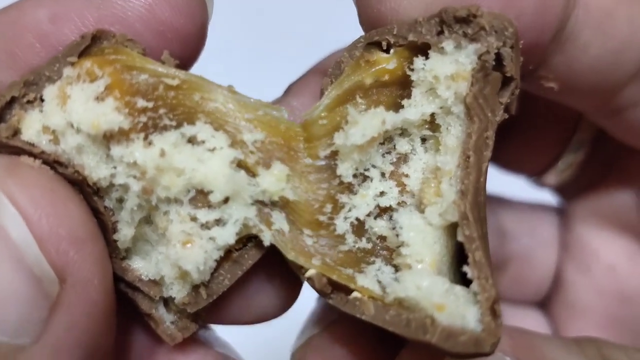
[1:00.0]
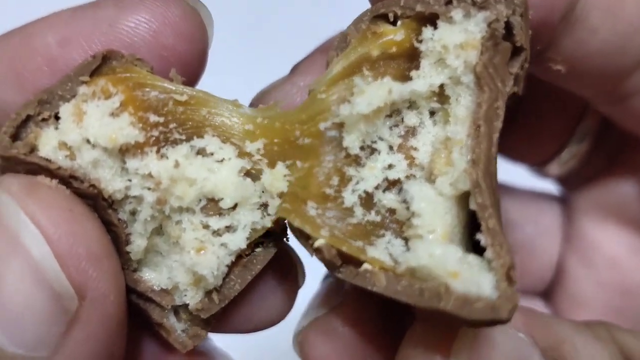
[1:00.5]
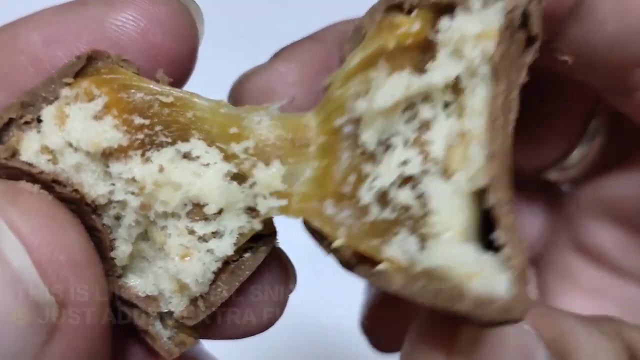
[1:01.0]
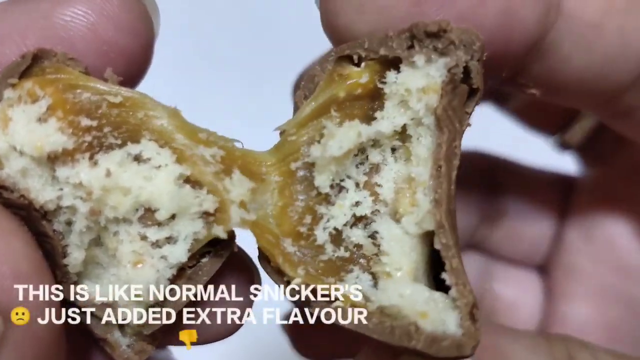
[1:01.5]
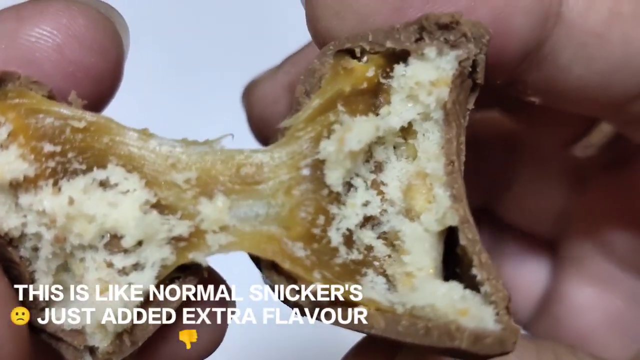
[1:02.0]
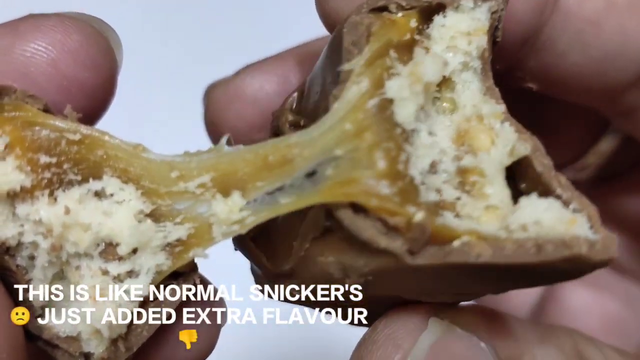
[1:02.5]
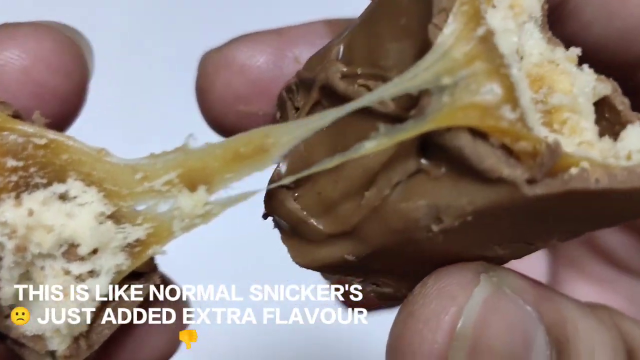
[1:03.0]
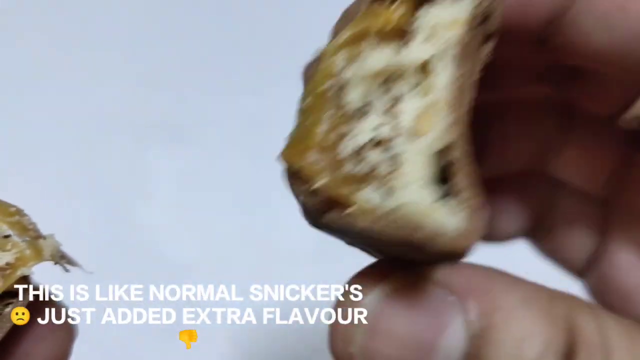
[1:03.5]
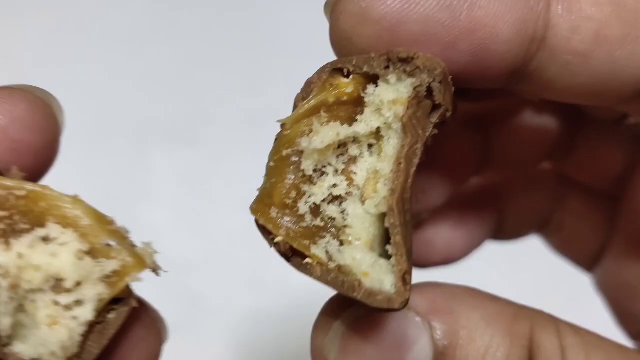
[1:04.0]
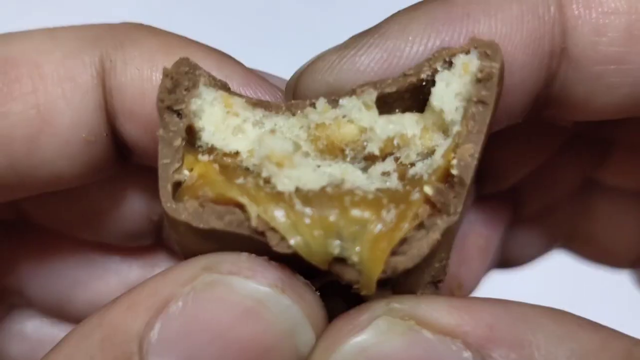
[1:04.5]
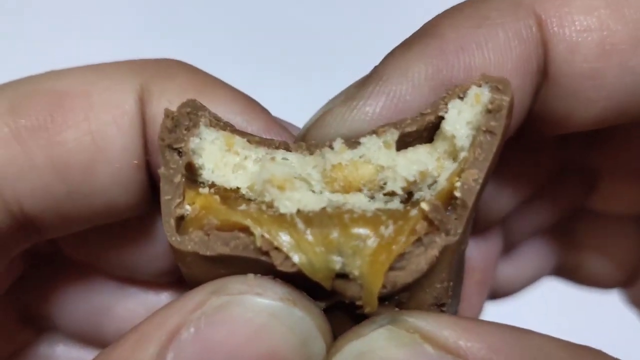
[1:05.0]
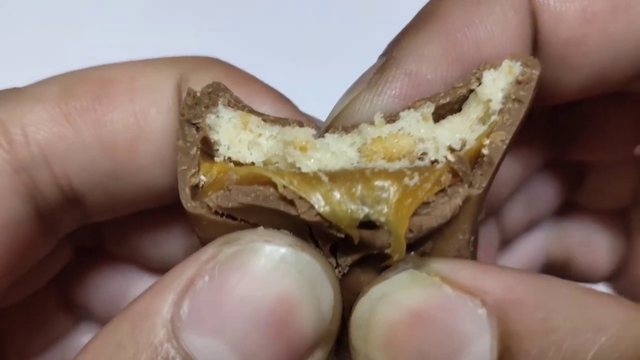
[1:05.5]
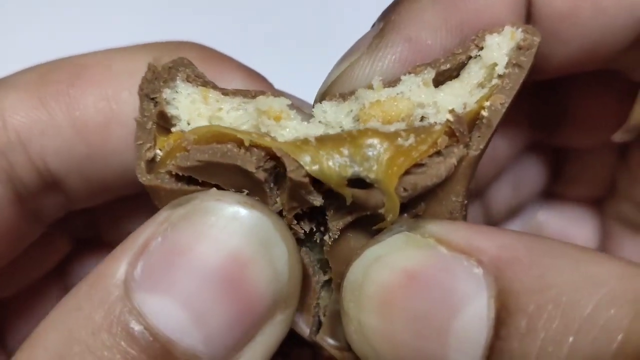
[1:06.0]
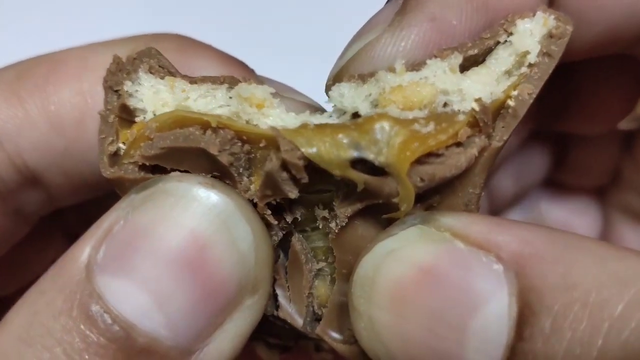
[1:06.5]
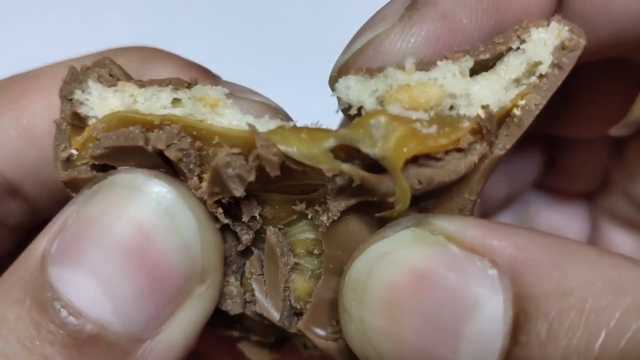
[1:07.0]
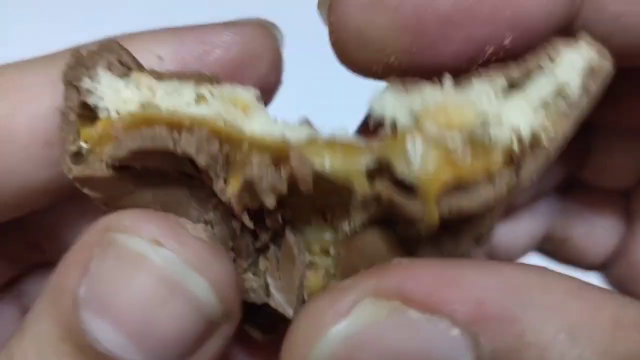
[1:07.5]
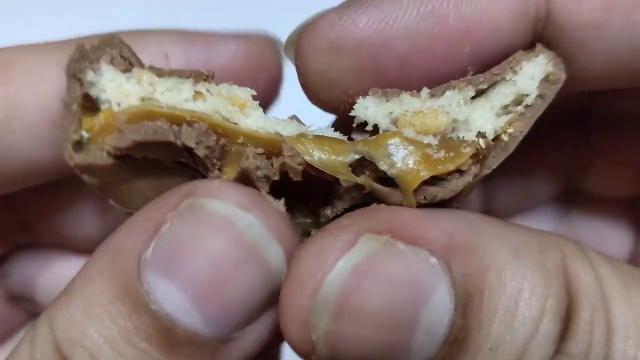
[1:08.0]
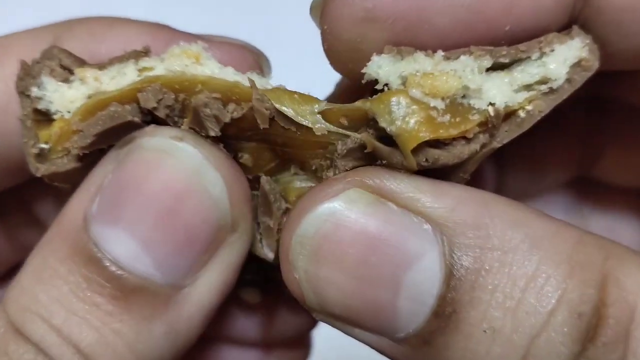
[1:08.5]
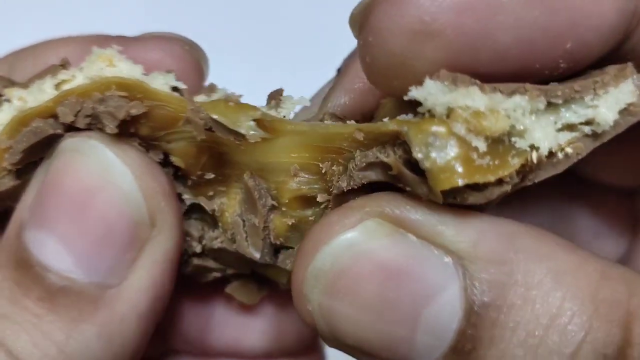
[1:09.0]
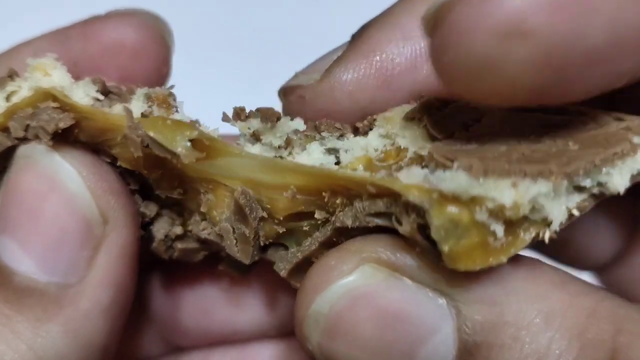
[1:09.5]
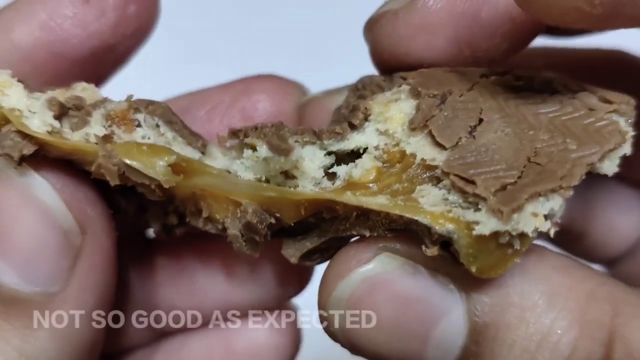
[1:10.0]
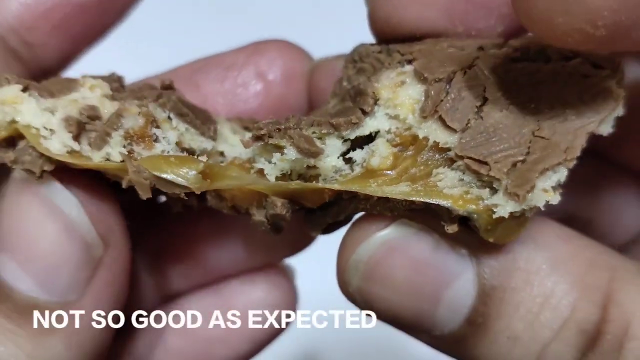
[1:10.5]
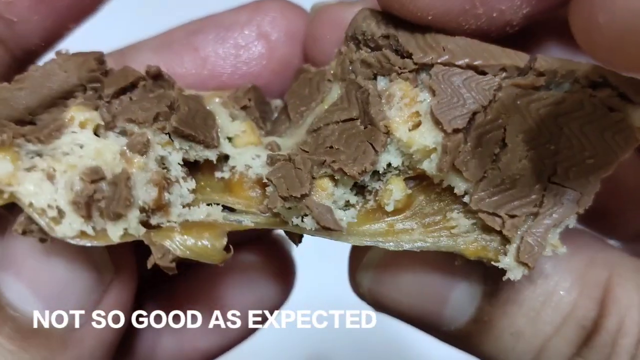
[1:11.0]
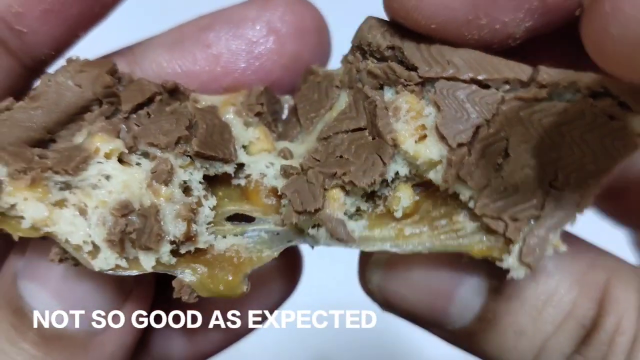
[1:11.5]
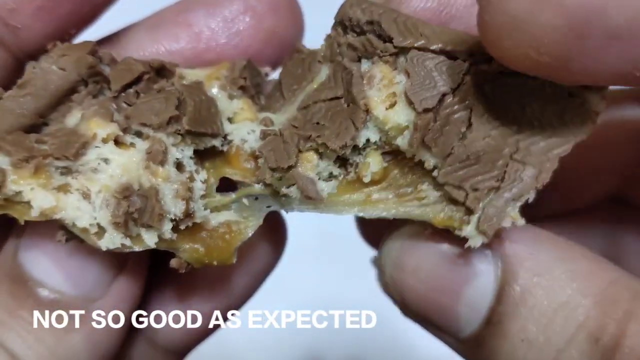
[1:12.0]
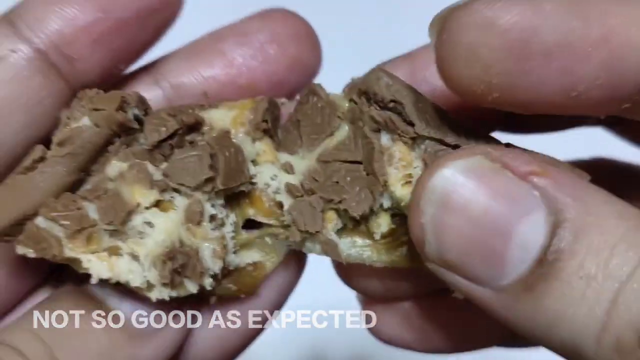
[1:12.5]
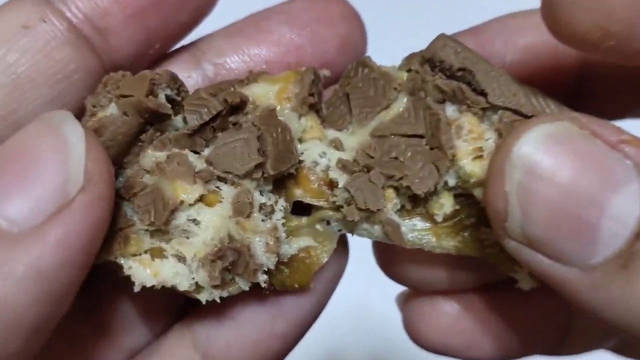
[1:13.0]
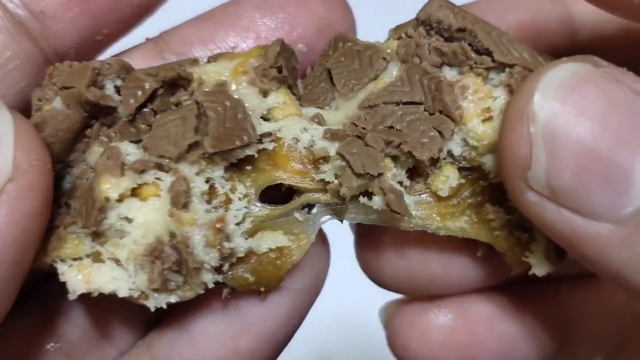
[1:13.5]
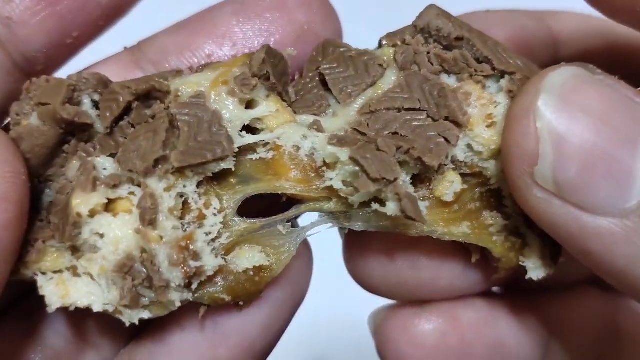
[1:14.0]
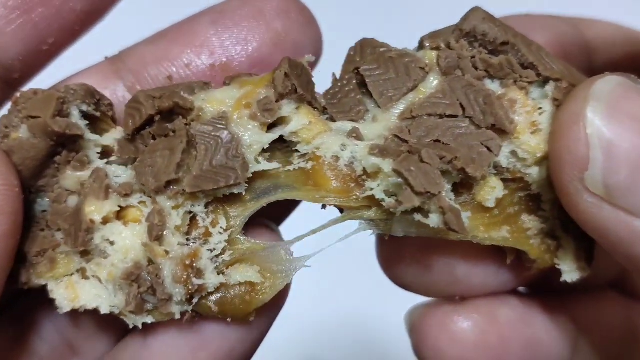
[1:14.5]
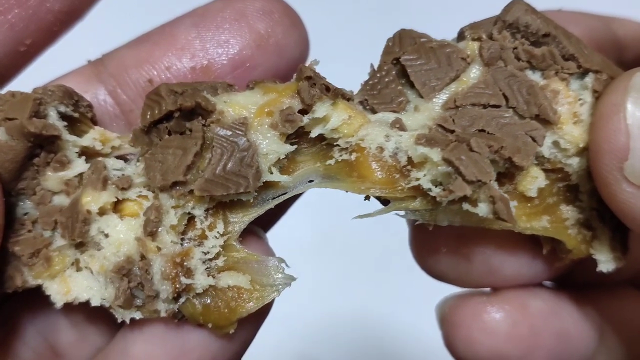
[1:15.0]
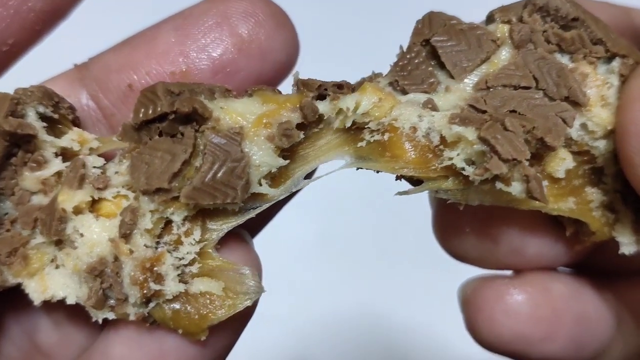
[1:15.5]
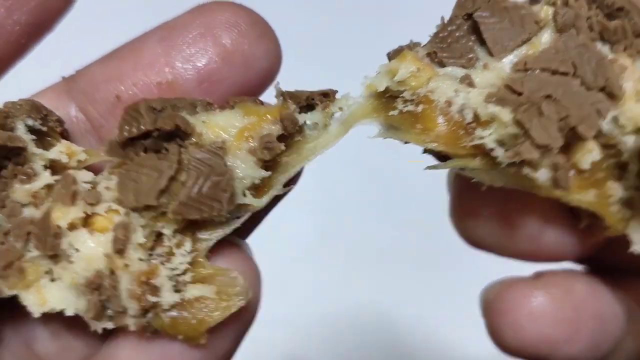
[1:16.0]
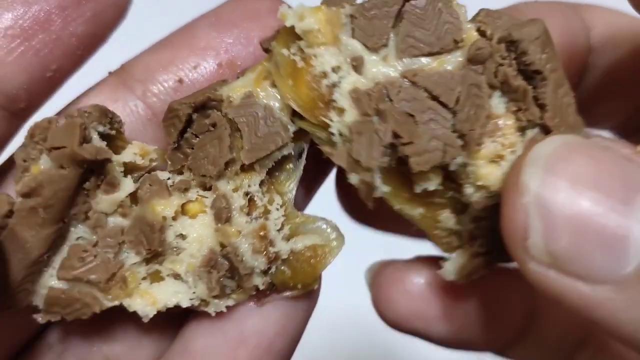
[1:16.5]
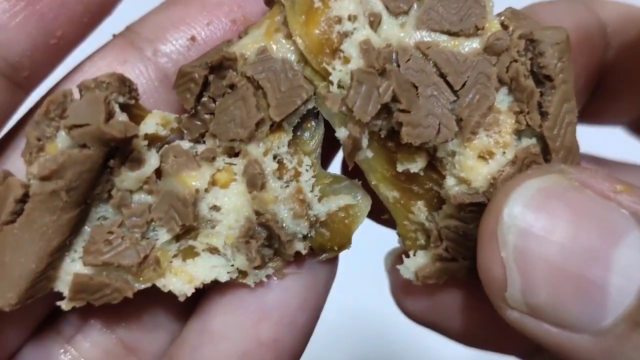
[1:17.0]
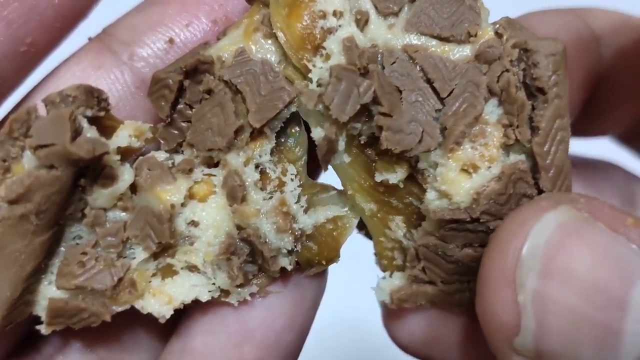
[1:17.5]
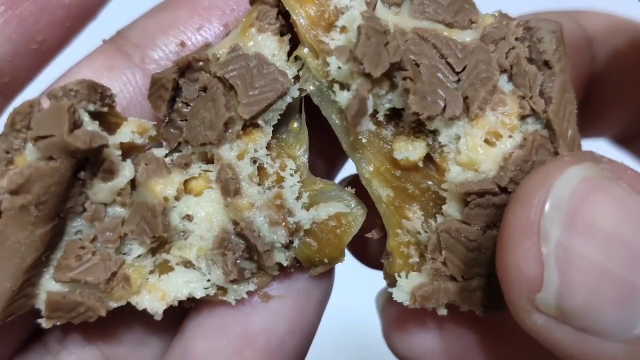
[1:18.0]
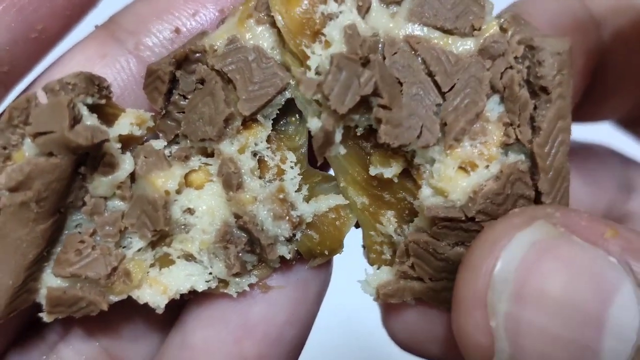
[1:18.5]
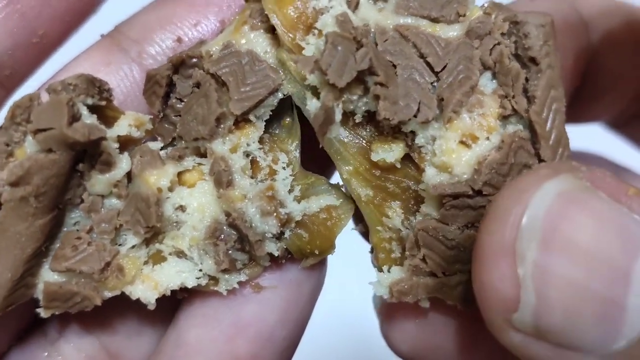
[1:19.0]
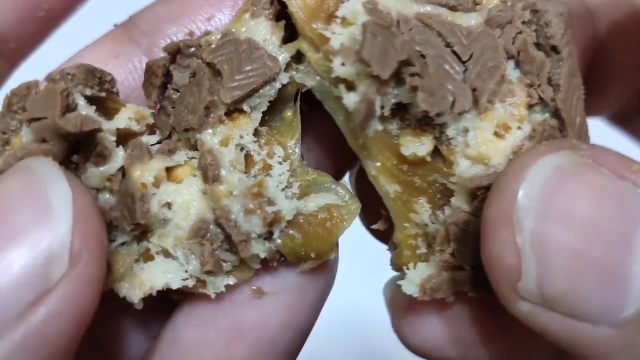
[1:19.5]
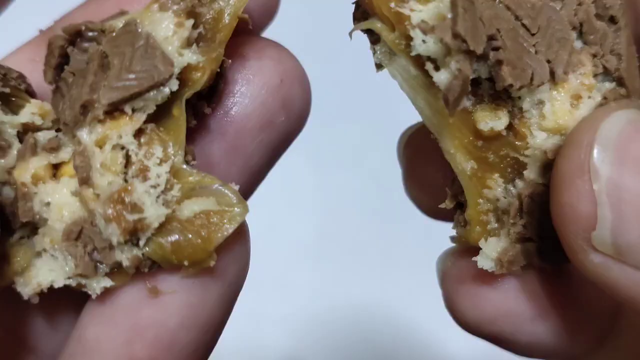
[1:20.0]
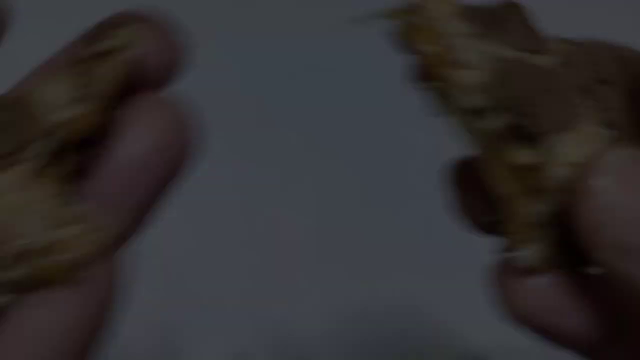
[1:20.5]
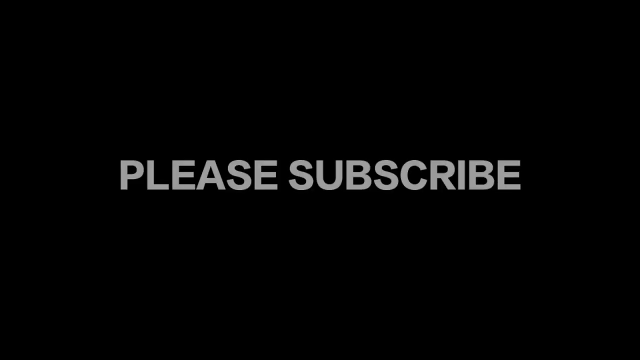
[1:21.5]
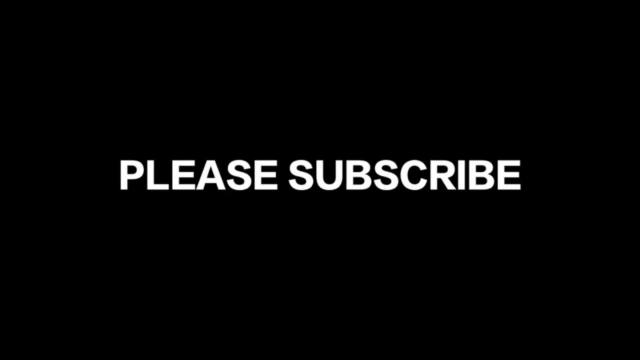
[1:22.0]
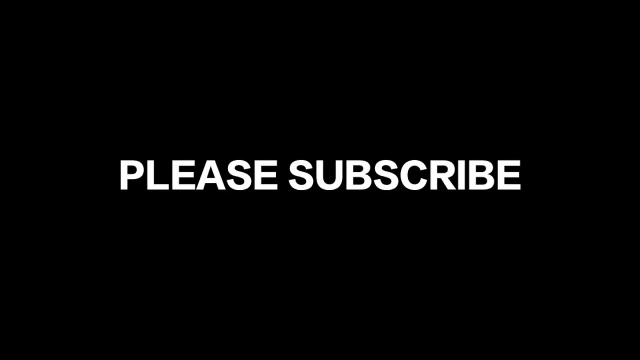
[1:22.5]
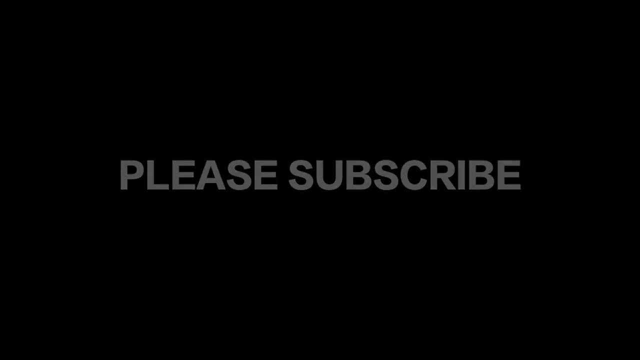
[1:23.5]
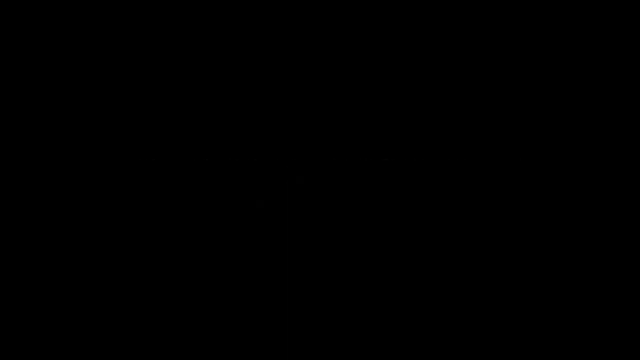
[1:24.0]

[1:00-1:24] What looks like a pair of hands breaks apart a Snickers bar to show what is inside. At the beginning, there appear to be two cross sections of the bar already, showing caramel and some white pieces. White text at the bottom left reads "this is like normal Snickers", followed by a sad emoji, then "Just added extra flavor" and a thumbs-down emoji. The two hands pull the caramel apart, then take one of the broken-off pieces and break it vertically downwards, so the caramel spreads apart and the chocolate casing breaks. White text at the bottom left reads "not so good as expected". Peanuts, white flakes, caramel and broken chocolate are visible as two fingers break up and crumble the bar. The scene then transitions to black with white text reading "please subscribe", and the video ends.